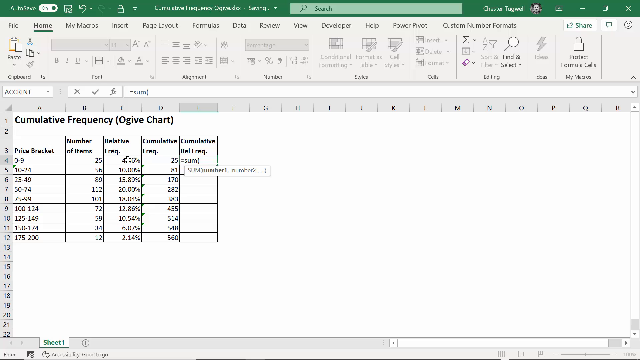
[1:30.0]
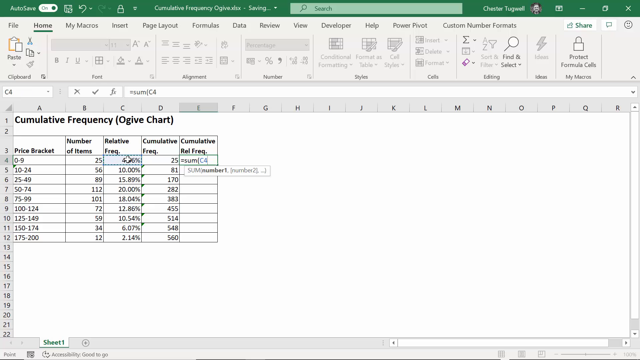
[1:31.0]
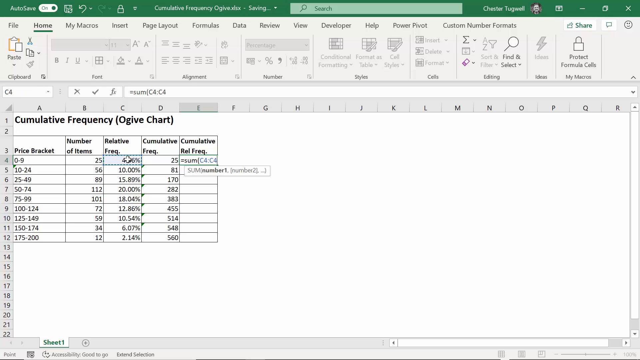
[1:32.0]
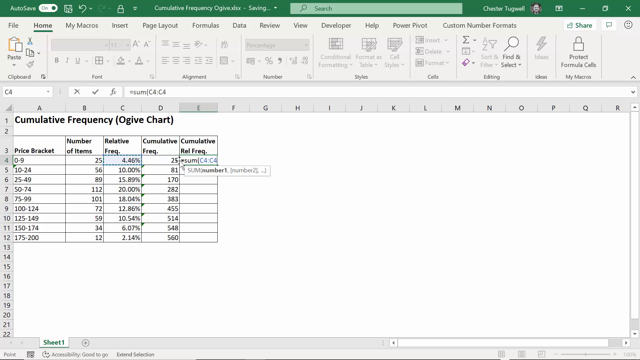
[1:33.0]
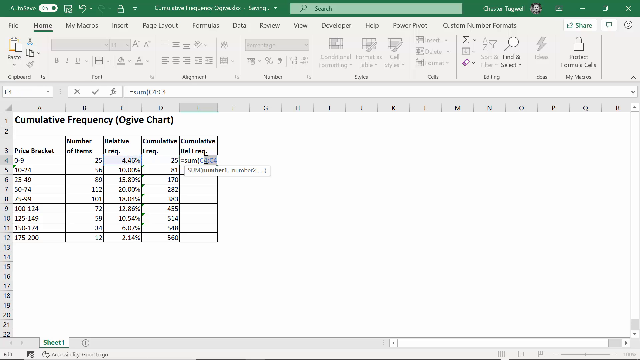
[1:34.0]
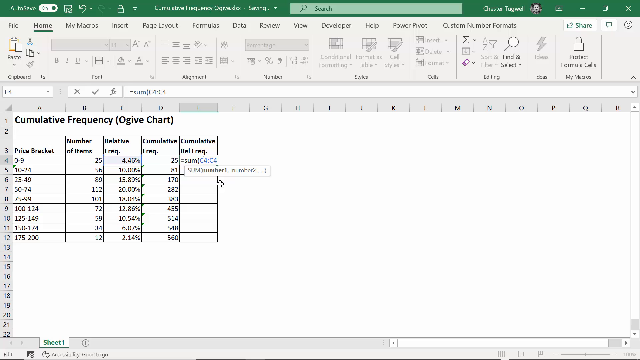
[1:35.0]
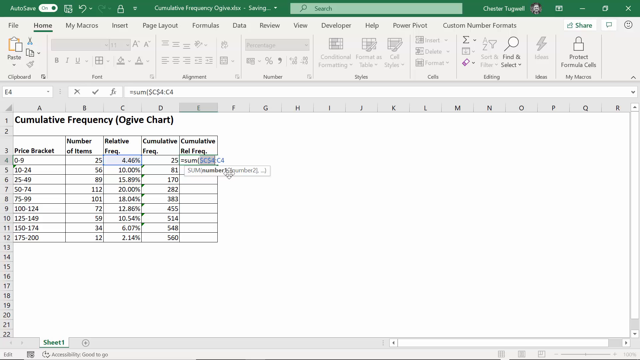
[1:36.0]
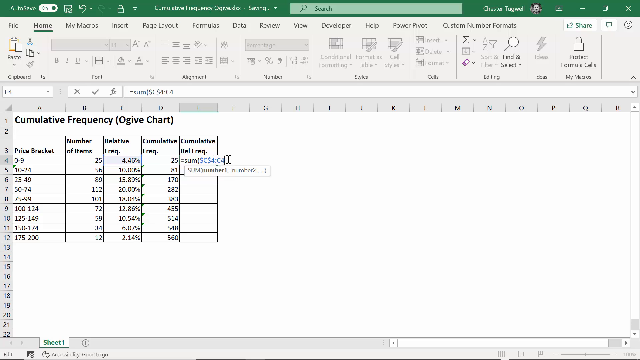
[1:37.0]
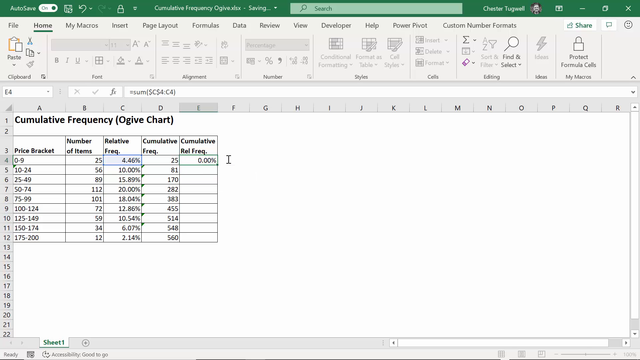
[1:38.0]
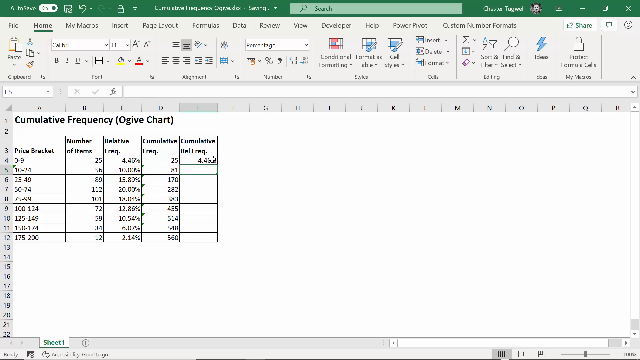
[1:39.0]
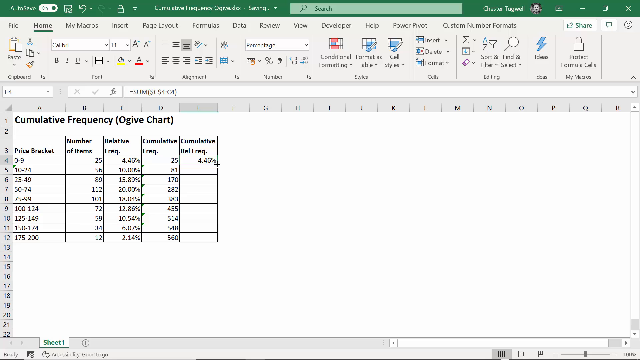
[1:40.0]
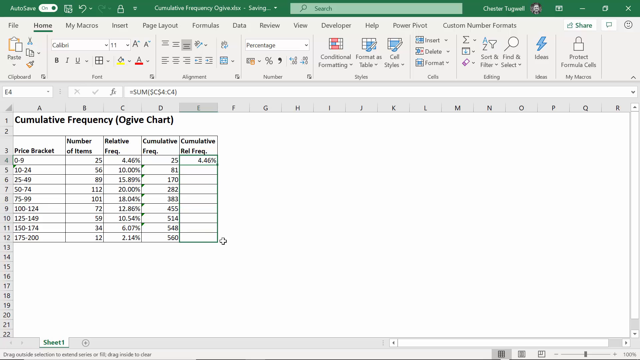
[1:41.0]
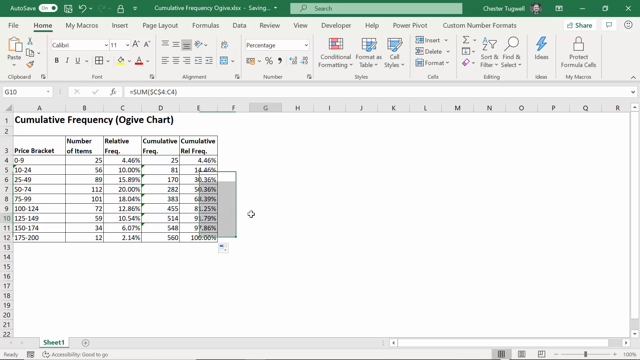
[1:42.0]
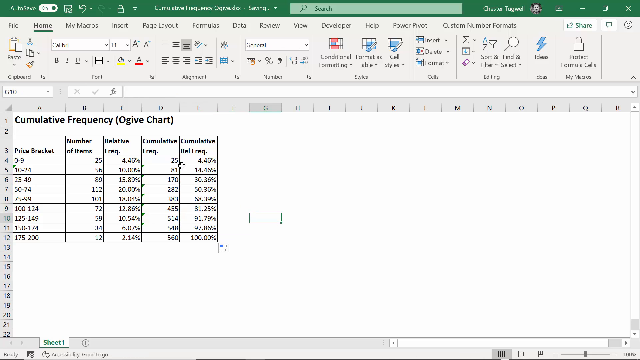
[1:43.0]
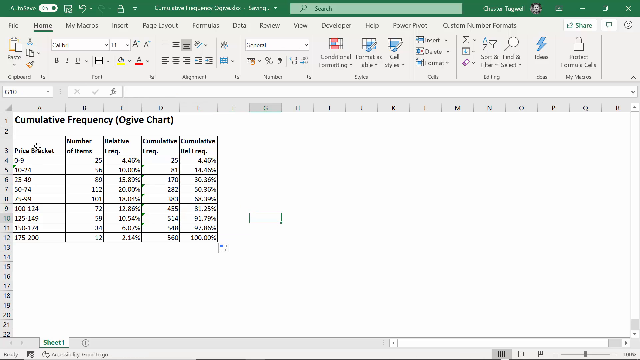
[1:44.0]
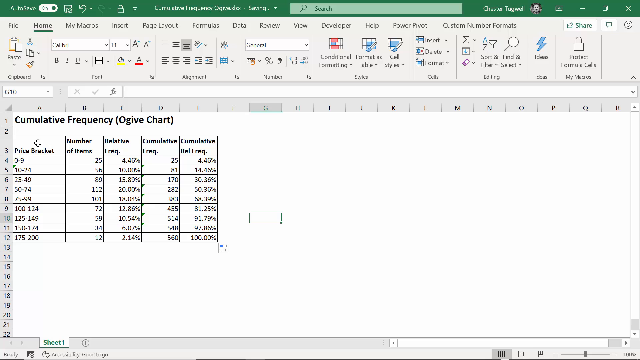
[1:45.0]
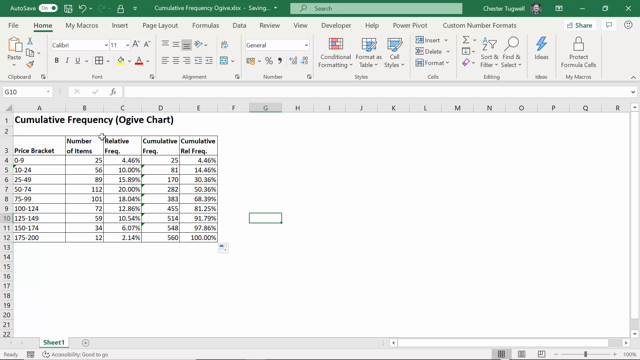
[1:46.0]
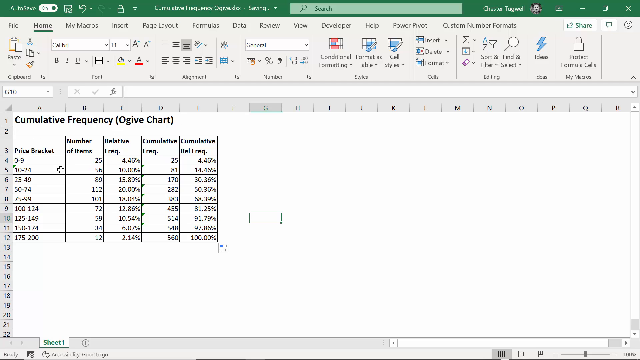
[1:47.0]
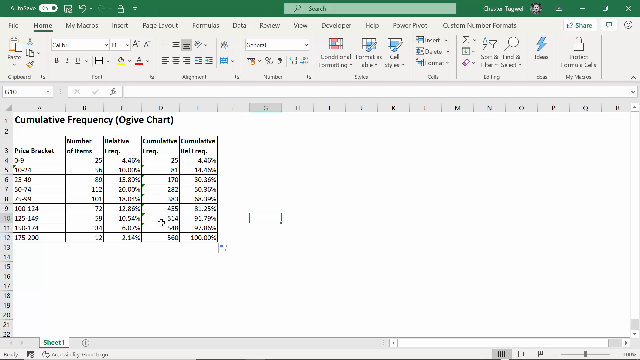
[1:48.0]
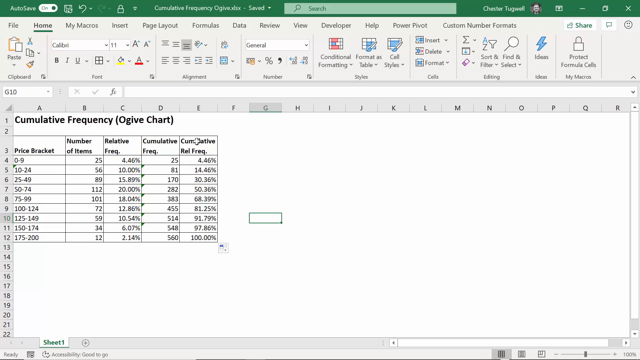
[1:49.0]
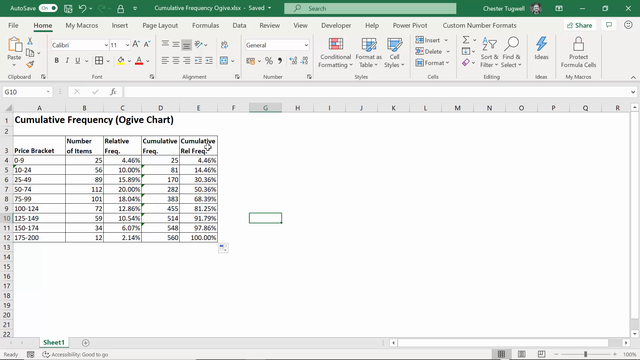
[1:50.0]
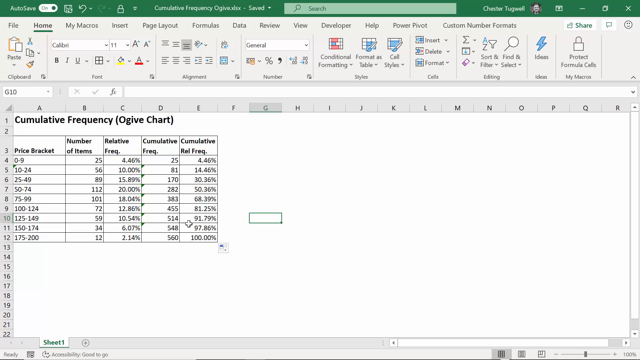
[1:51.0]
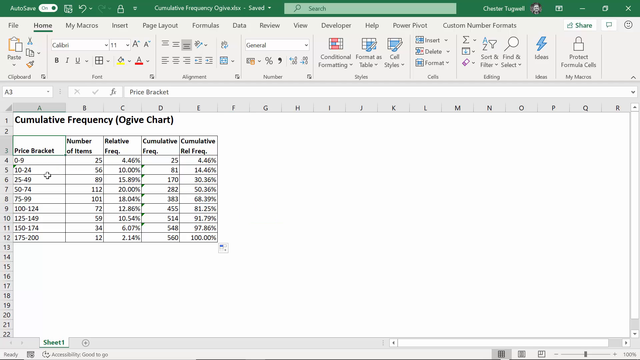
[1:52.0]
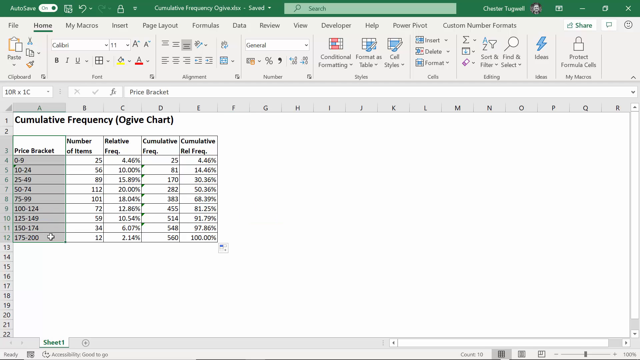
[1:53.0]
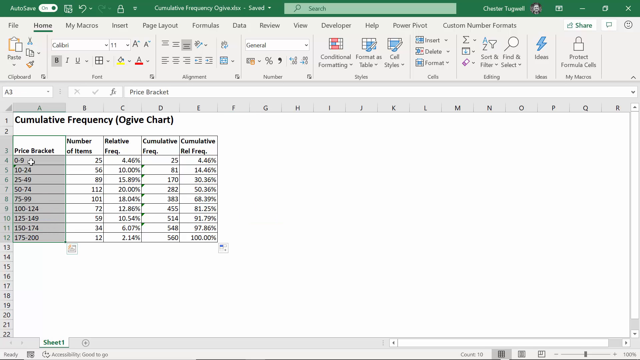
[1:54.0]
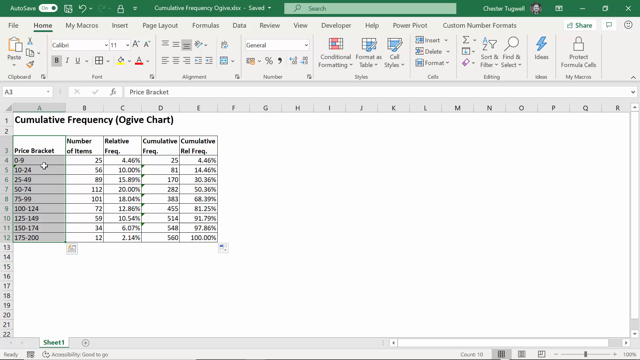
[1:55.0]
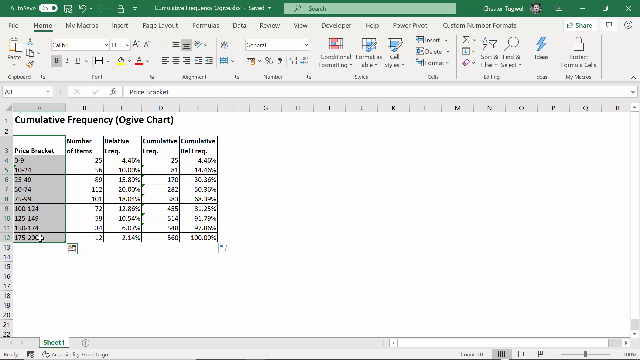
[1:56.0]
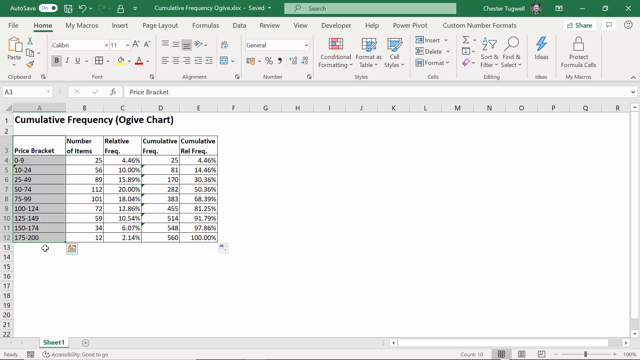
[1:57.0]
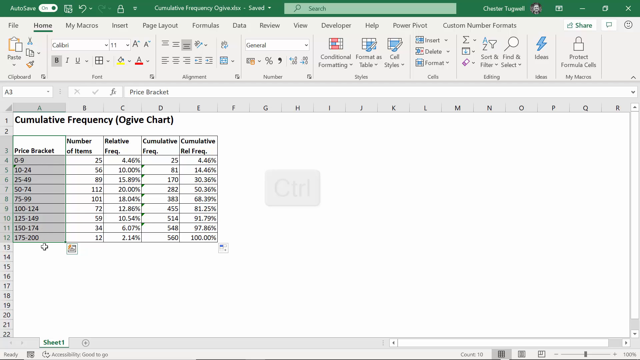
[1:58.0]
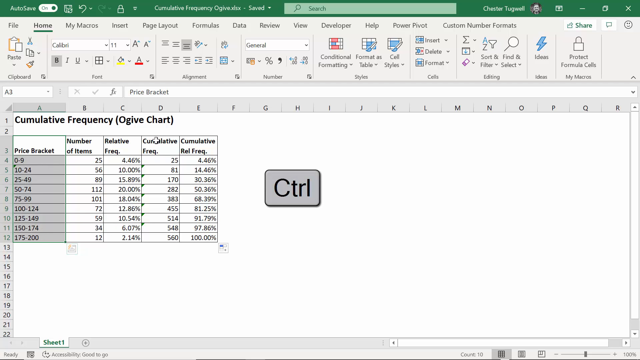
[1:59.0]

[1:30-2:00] The person is in the first box of the cumulative frequency section, E4, entering a sum of numbers, and percentages appear in each cell, starting at 4.46% and adding up to 100% at the end. The person then selects the price bracket column from cell 4 down to cell 12, and "CTRL" appears on the screen right after the selection, so they seem to be doing a control copy. They then also select the fourth column, cumulative frequency, so both the price bracket and cumulative frequency columns are selected.